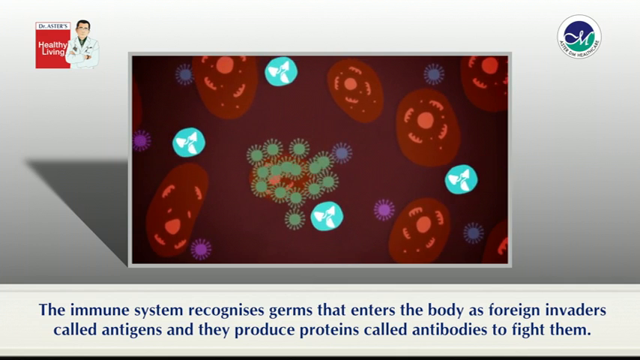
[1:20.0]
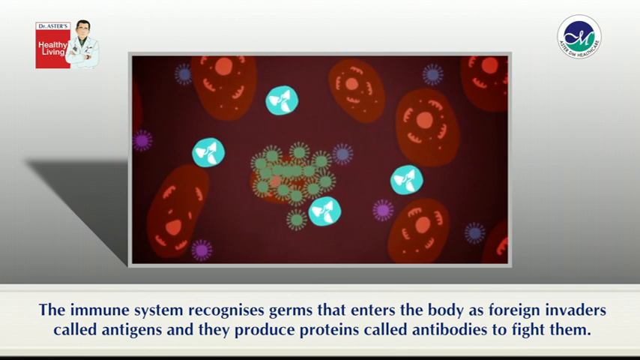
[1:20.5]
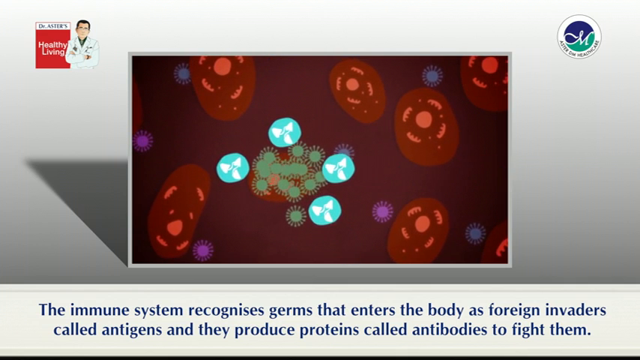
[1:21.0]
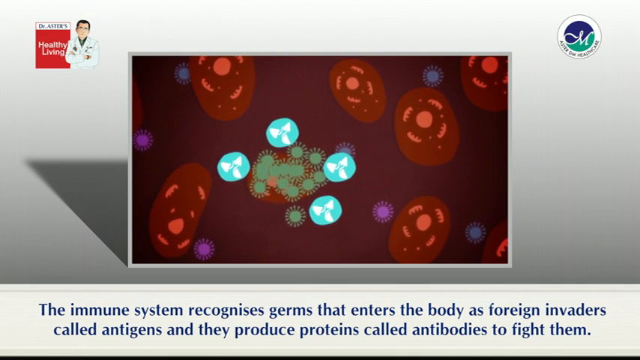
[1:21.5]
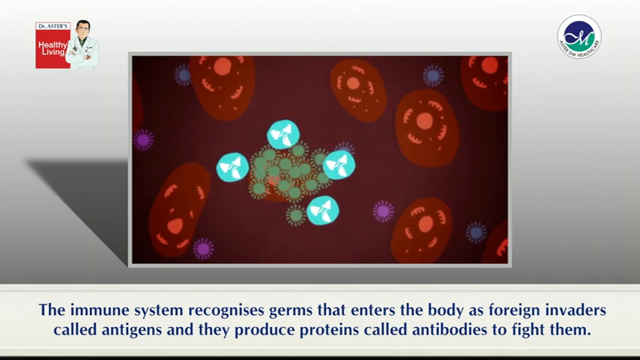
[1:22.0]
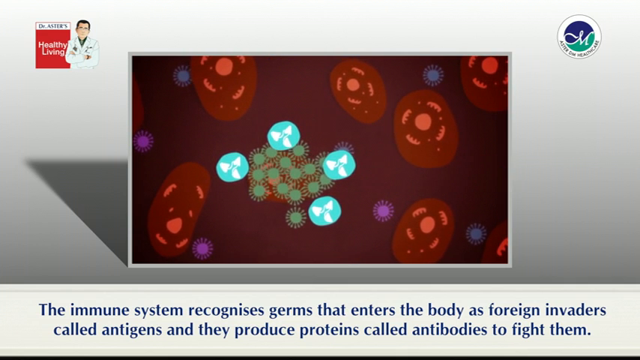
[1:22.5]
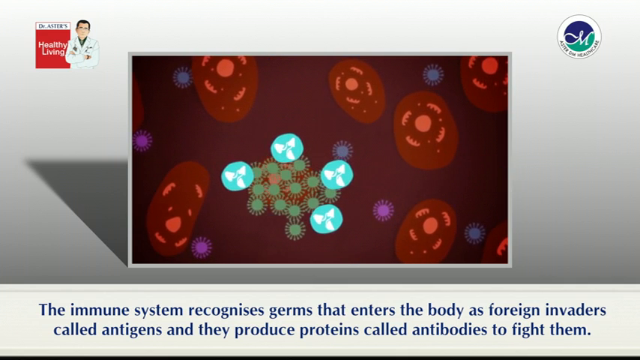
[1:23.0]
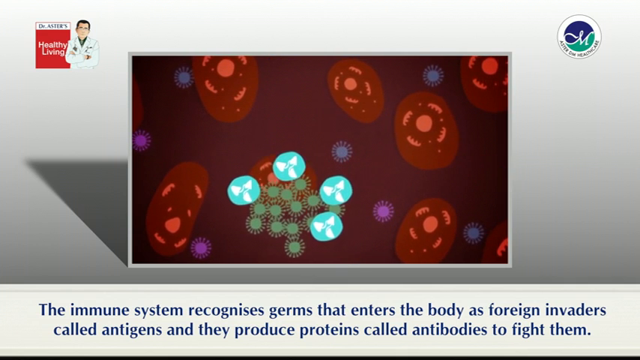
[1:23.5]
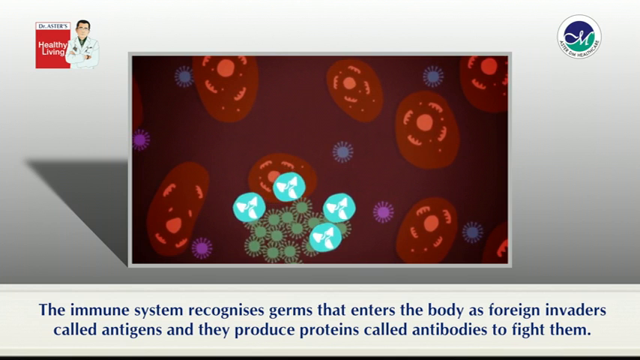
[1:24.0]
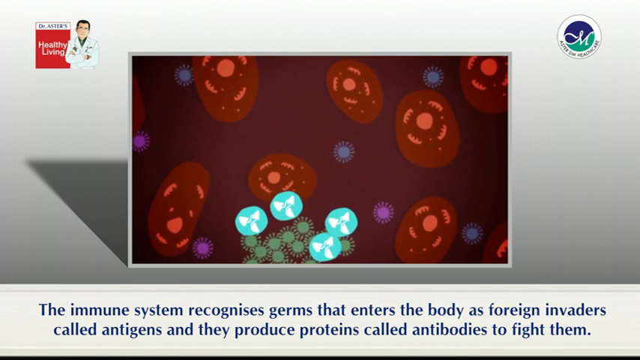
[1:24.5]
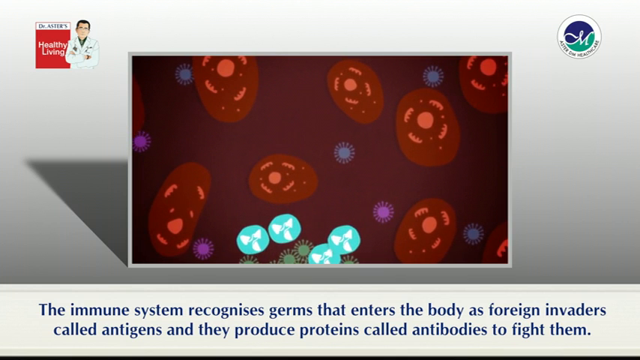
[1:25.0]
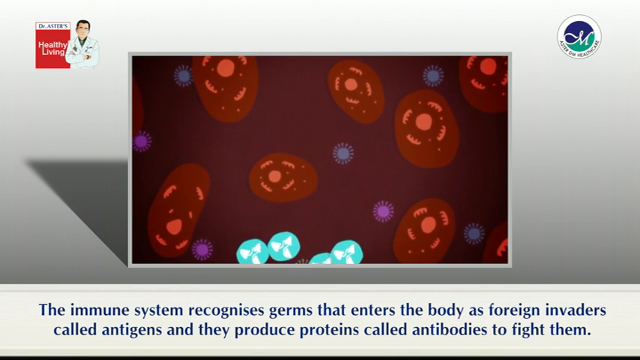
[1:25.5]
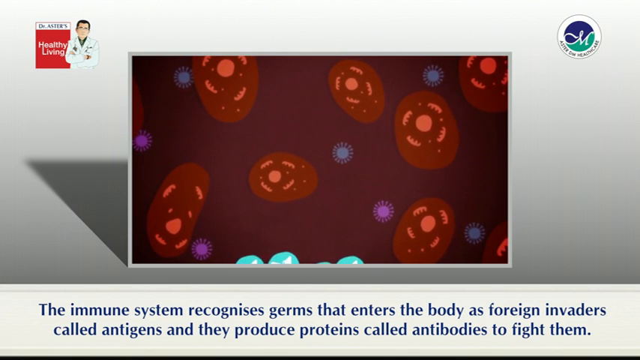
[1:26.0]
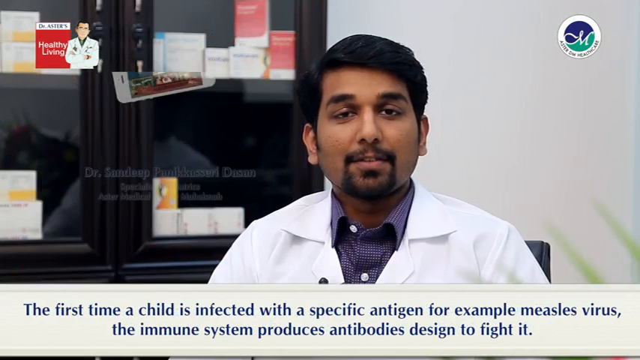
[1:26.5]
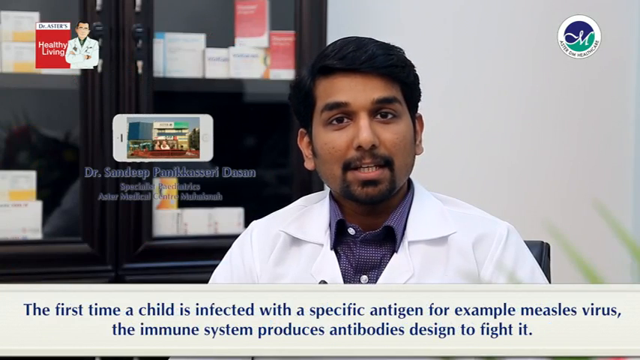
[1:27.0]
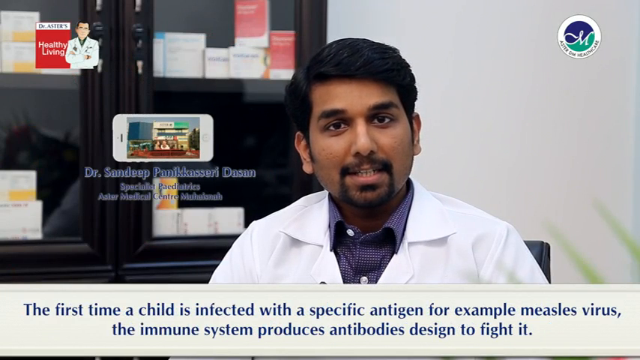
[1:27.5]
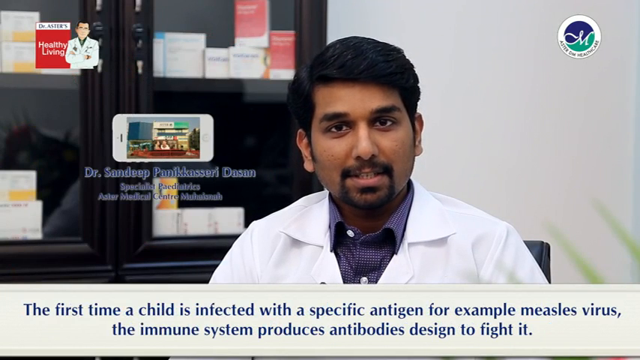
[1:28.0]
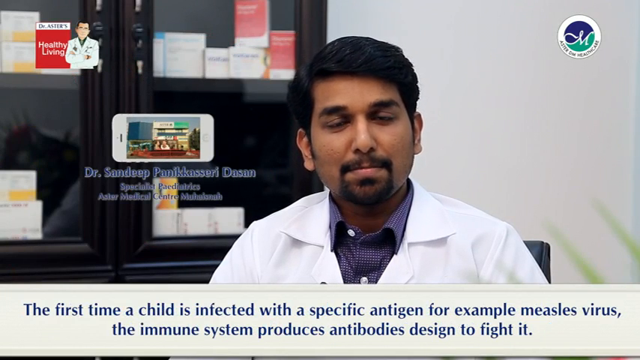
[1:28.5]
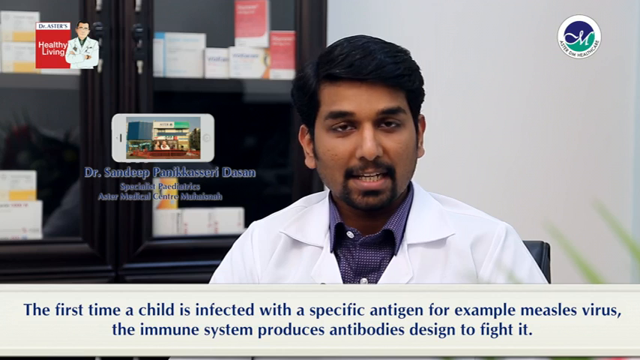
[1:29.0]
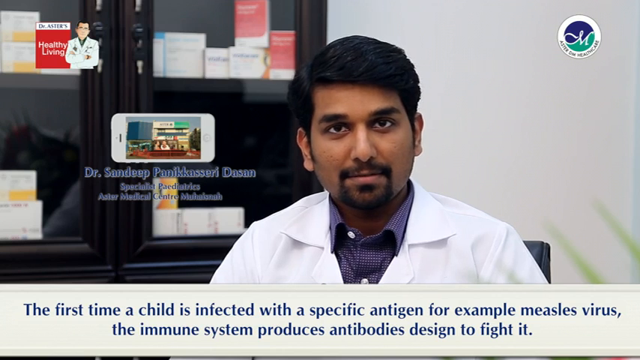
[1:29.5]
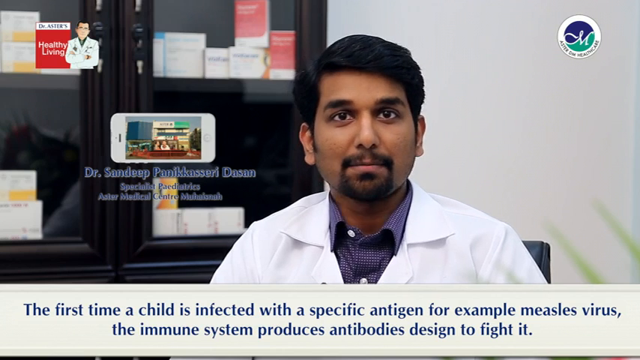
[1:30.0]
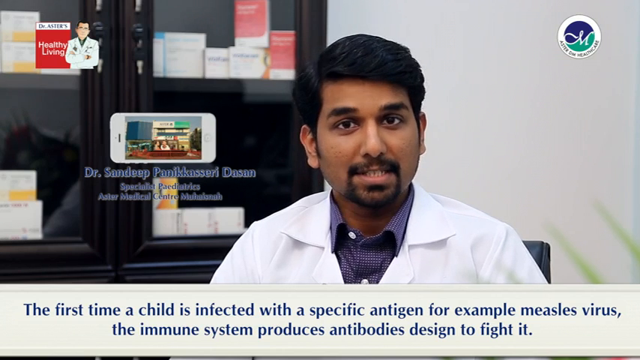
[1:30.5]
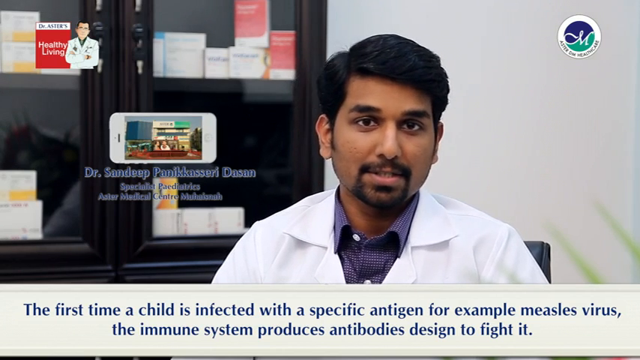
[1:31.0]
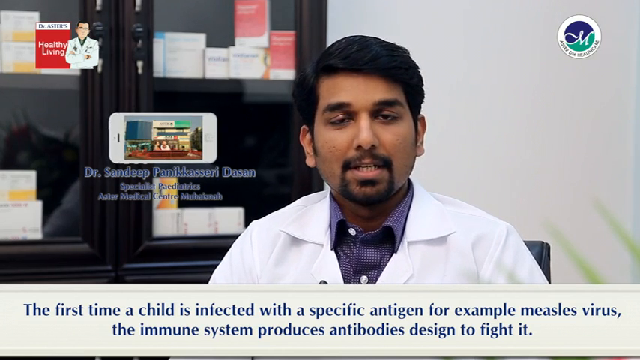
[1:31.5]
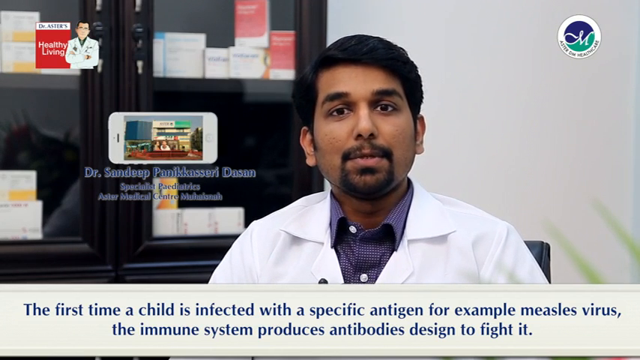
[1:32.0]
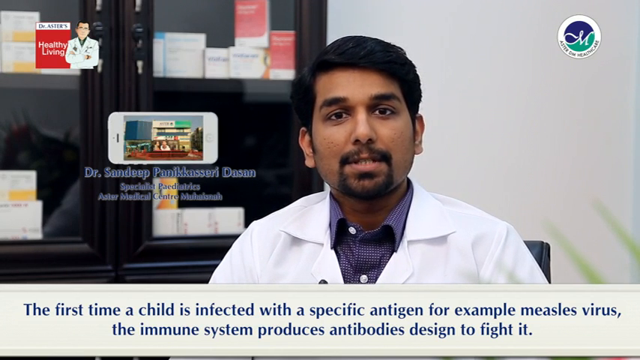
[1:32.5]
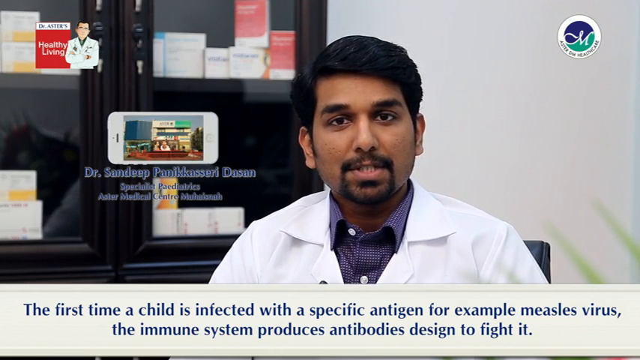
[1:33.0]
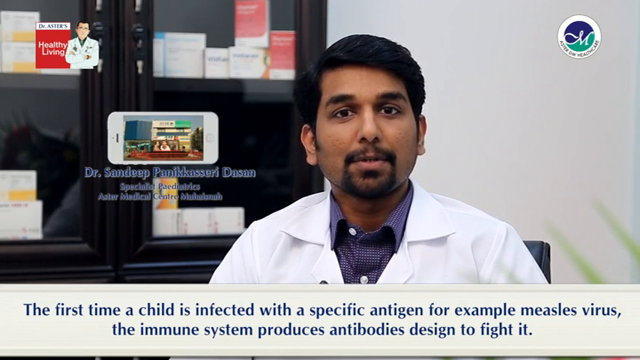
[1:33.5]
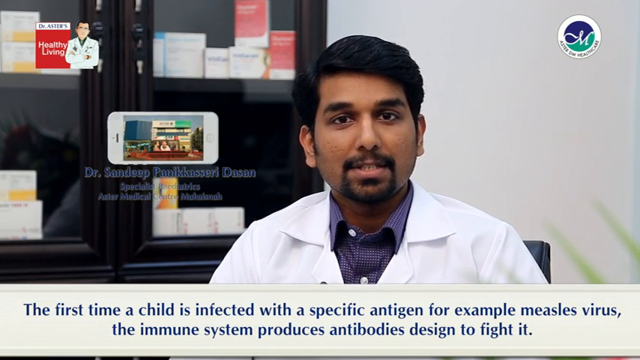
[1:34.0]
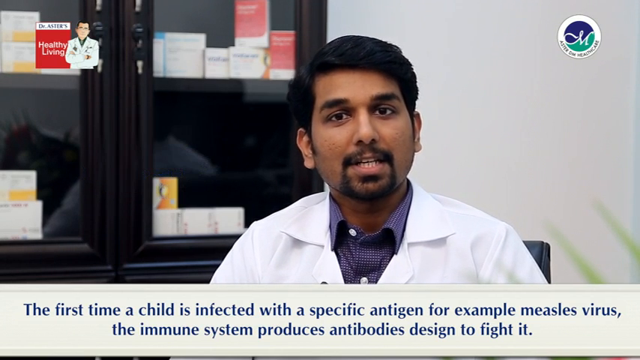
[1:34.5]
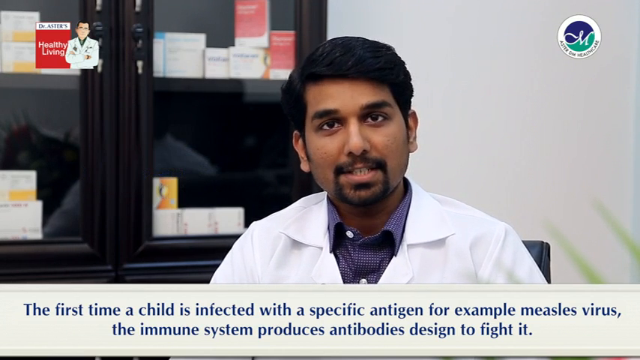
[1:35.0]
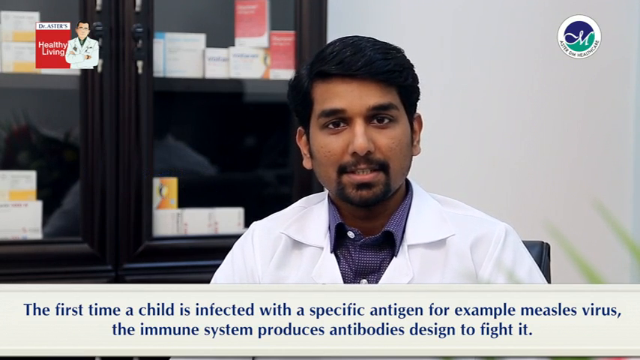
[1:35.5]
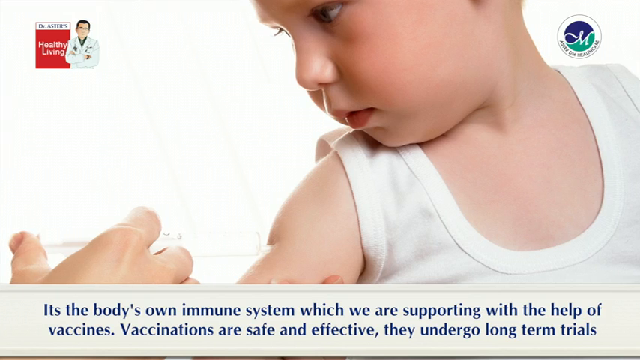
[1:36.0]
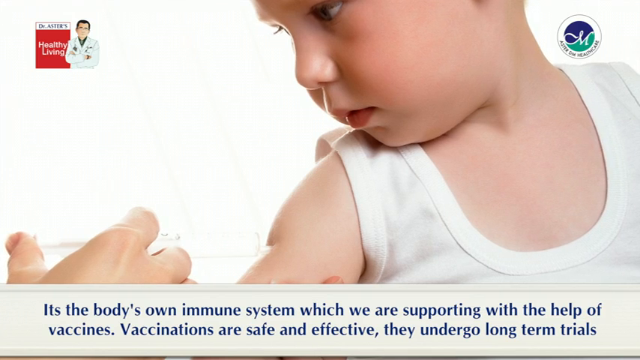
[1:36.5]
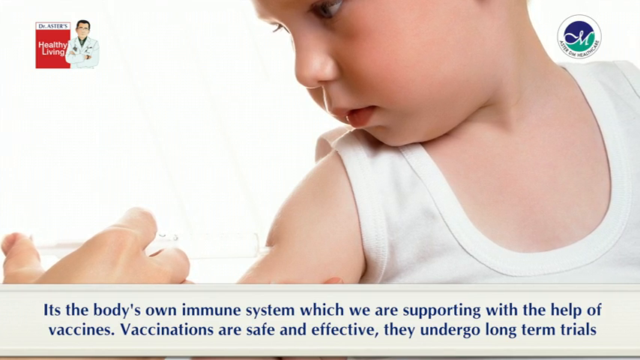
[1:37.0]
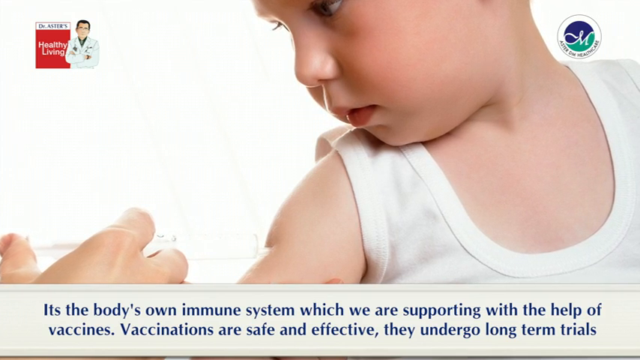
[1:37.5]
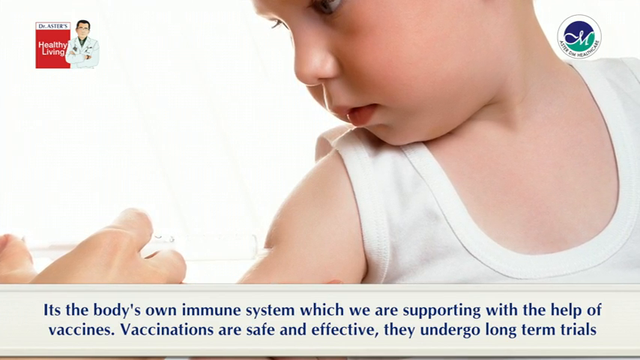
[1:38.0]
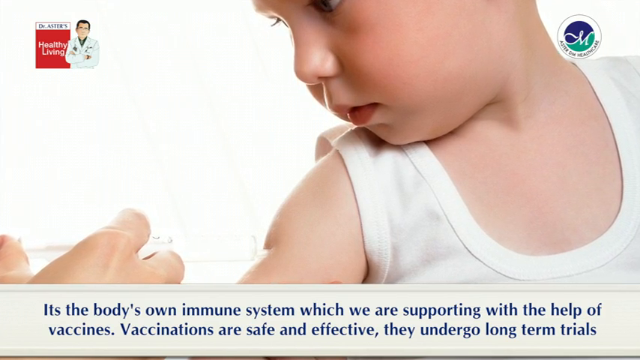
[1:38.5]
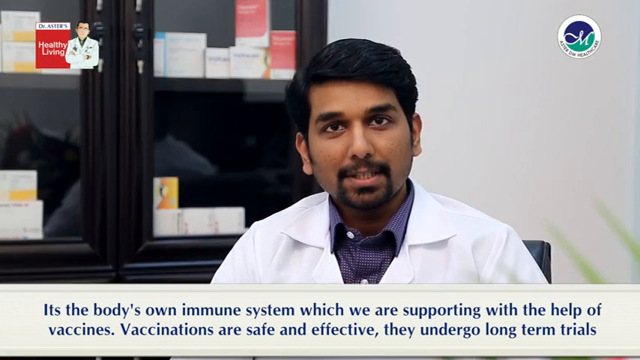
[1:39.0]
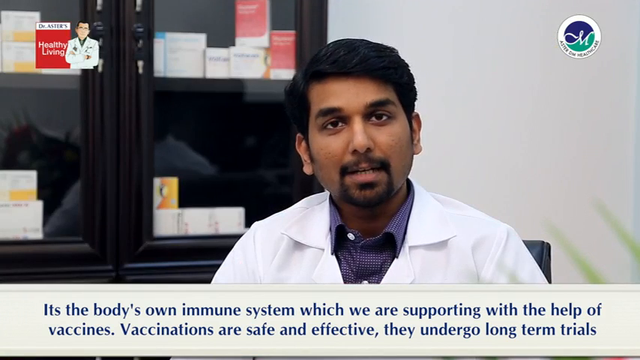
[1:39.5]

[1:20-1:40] A purple screen shows dark orange circles with bright orange spots on them, and little purple and little blue fuzzy balls float around the screen. Text underneath the picture reads "the immune system recognizes germs that enters the body as foreign invaders called antigens and they produce proteins called antibodies to fight them." Turquoise balls then show up on the purple screen. The video cuts to an Indian man with black hair and a black goatee sitting down and speaking to the camera, wearing a purple collared shirt with a white doctor's coat over it. Text along the bottom reads "the first time a child is infected with a specific antigen, for example, measles virus, the immune system produces antibodies designed to fight it."